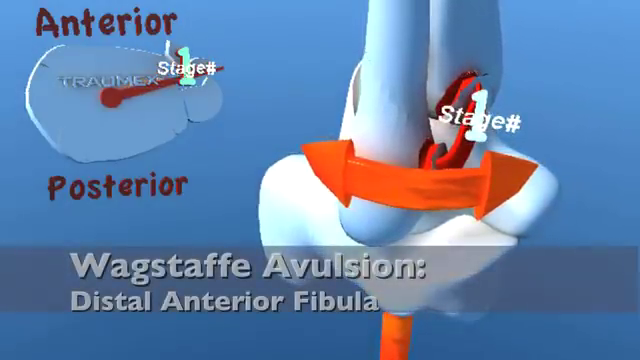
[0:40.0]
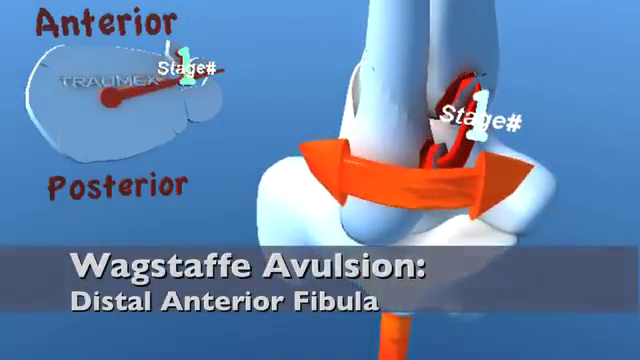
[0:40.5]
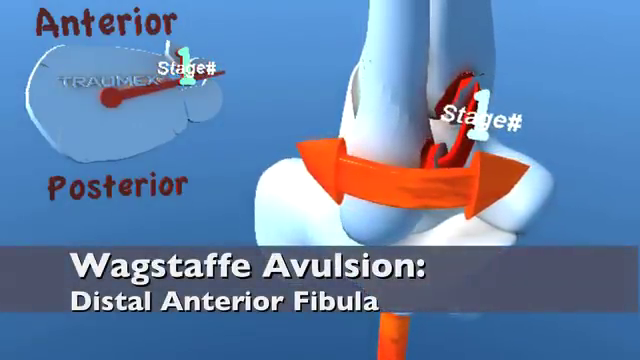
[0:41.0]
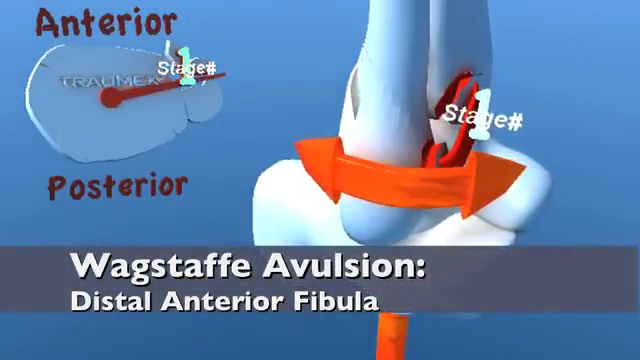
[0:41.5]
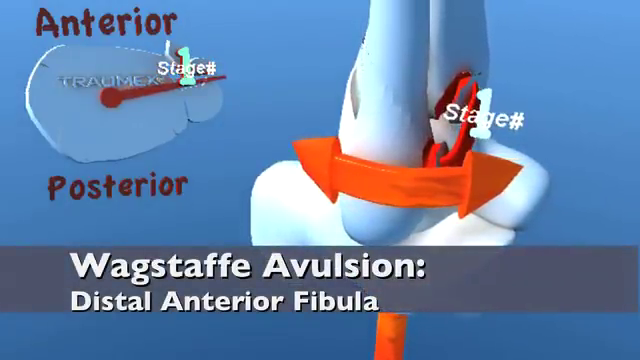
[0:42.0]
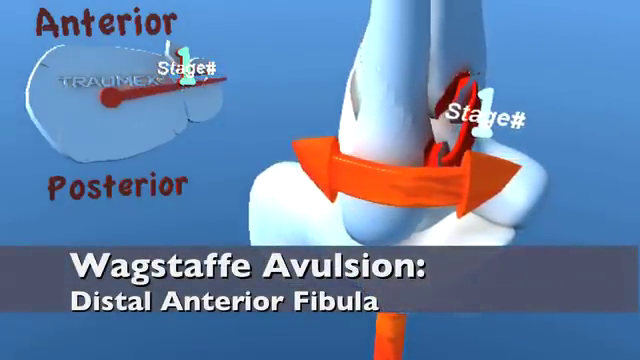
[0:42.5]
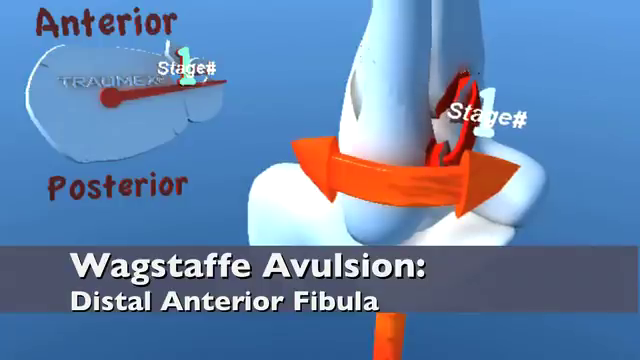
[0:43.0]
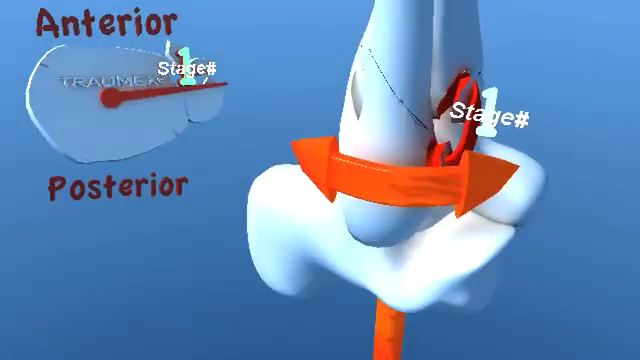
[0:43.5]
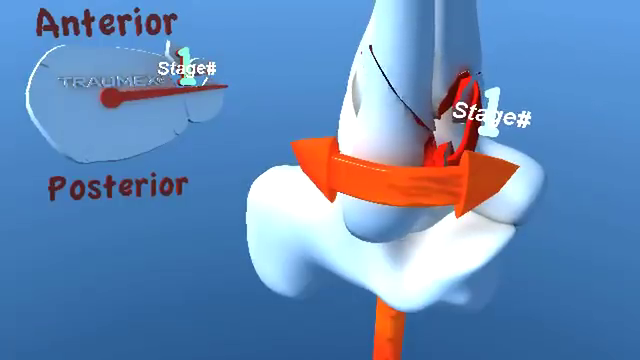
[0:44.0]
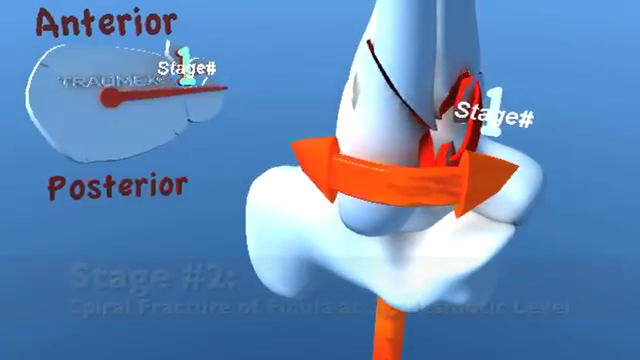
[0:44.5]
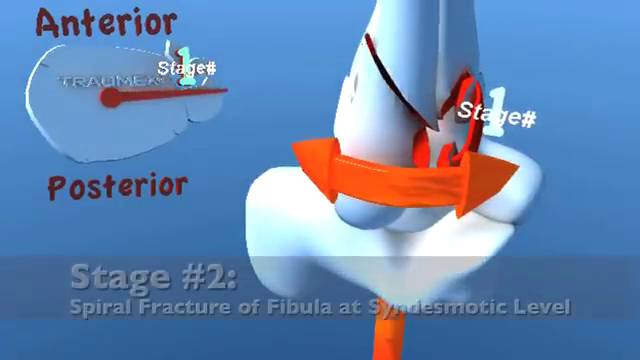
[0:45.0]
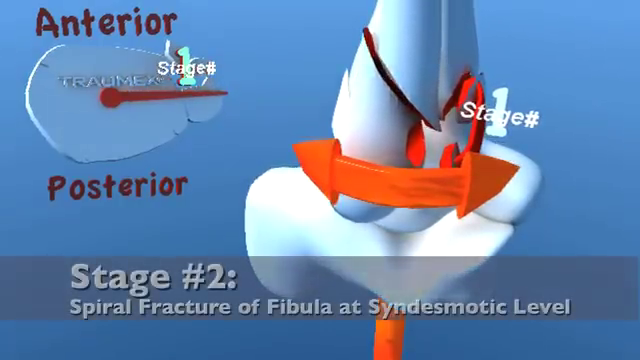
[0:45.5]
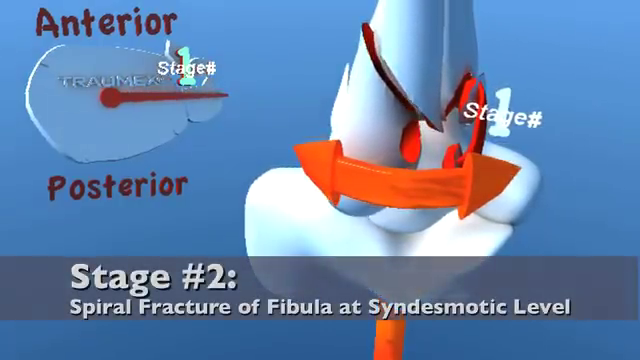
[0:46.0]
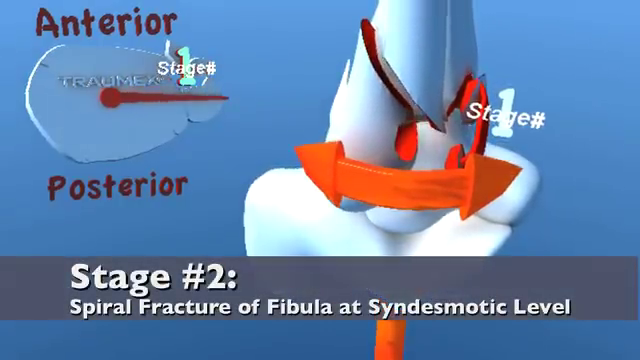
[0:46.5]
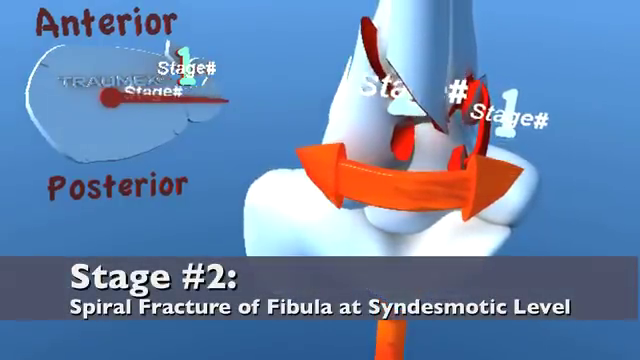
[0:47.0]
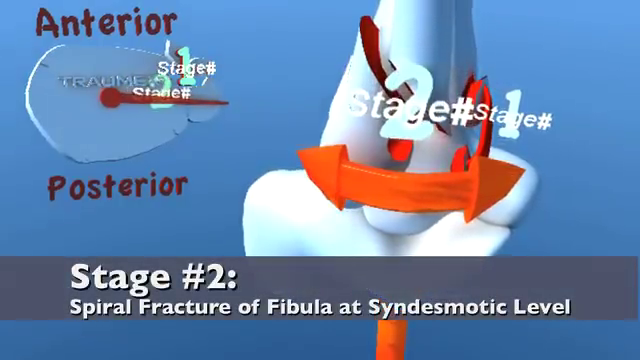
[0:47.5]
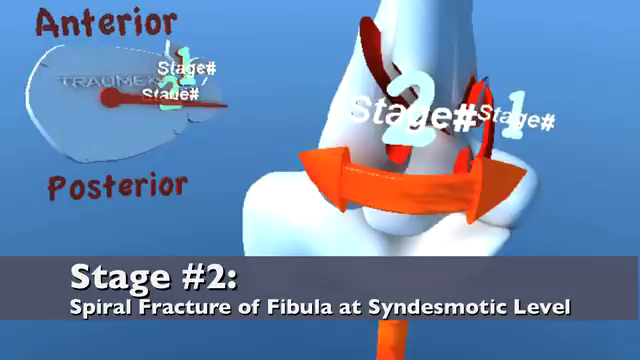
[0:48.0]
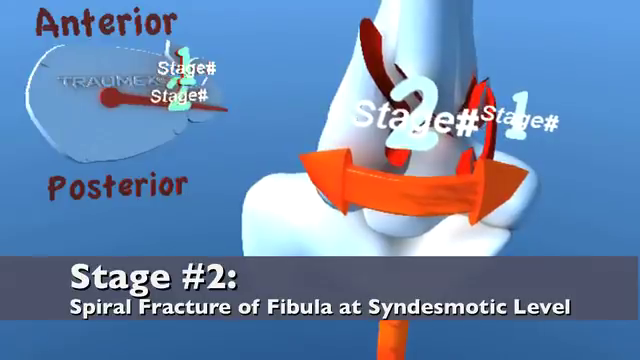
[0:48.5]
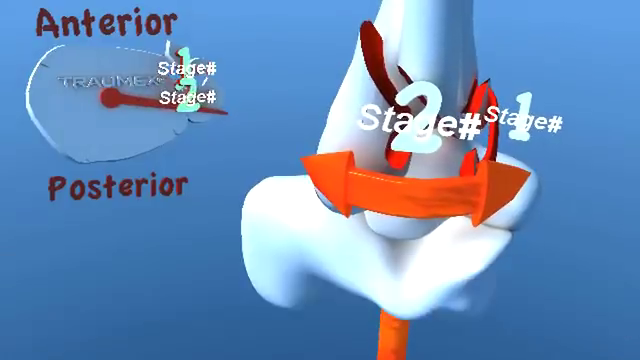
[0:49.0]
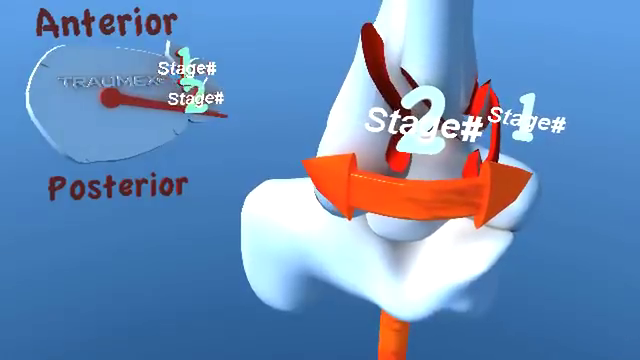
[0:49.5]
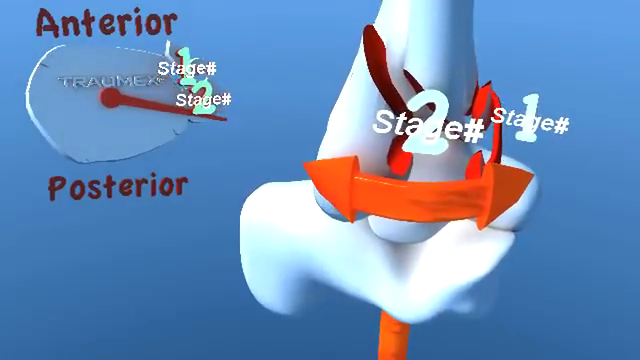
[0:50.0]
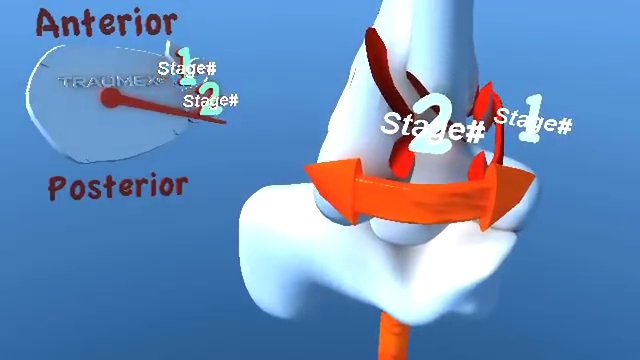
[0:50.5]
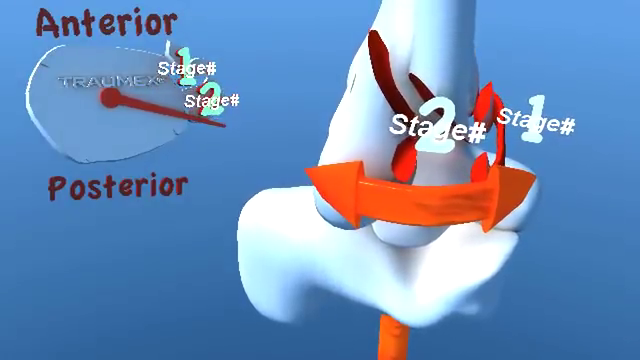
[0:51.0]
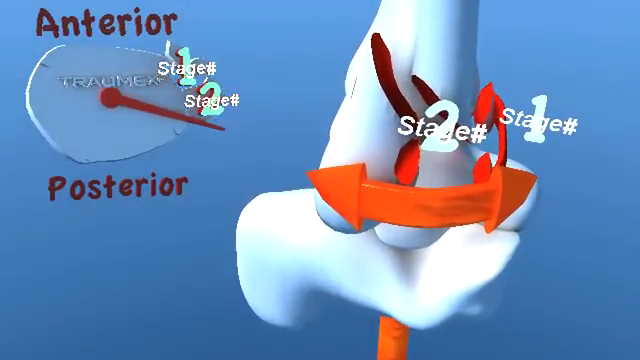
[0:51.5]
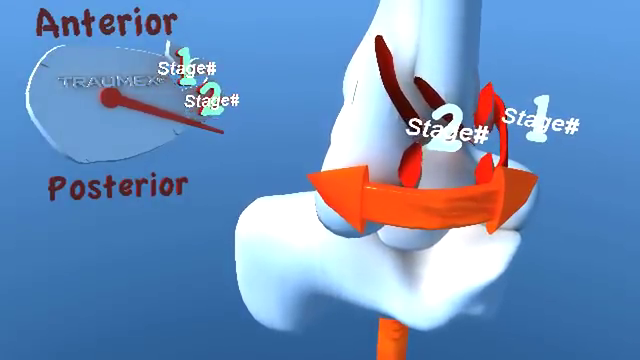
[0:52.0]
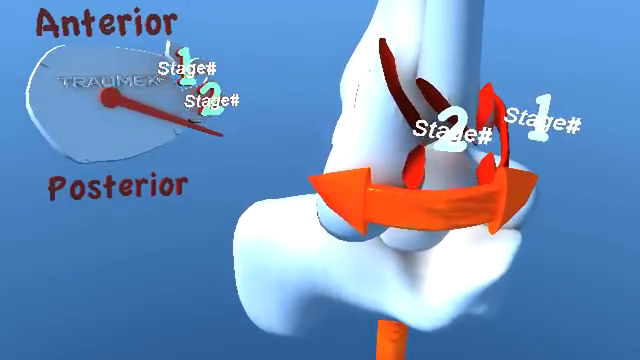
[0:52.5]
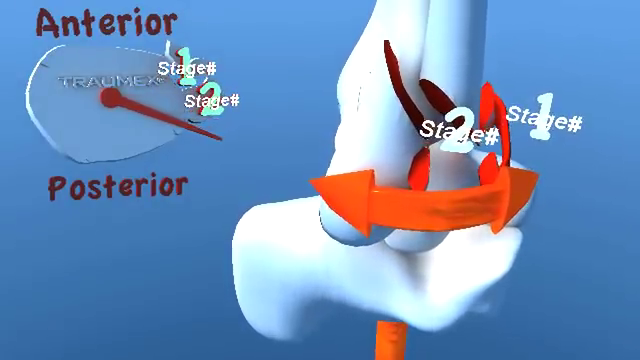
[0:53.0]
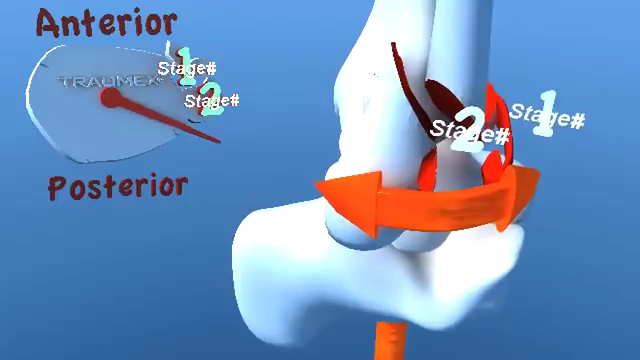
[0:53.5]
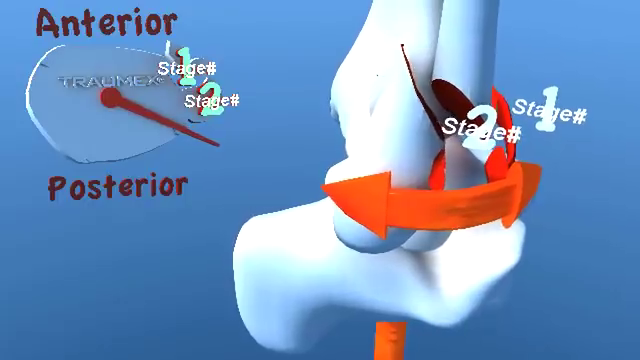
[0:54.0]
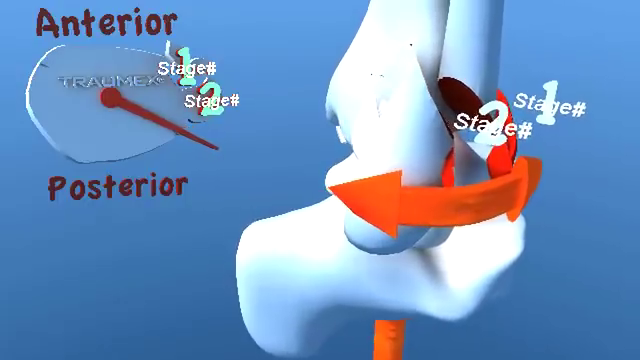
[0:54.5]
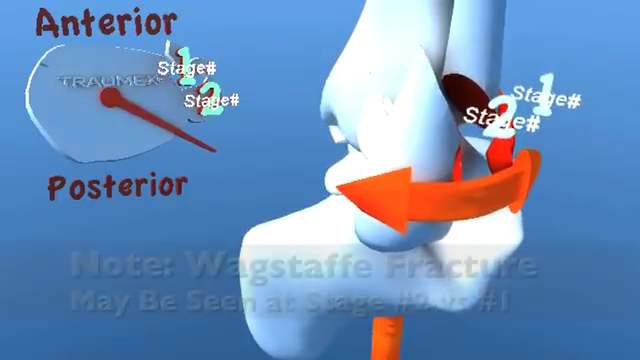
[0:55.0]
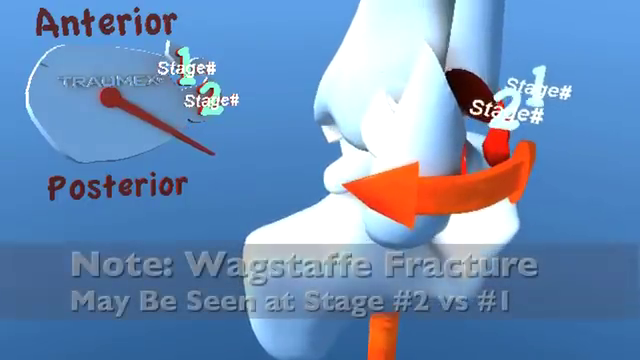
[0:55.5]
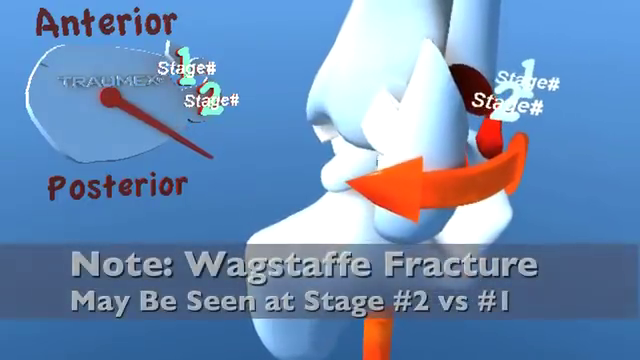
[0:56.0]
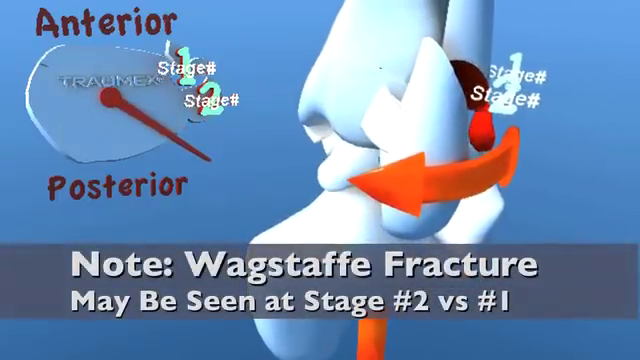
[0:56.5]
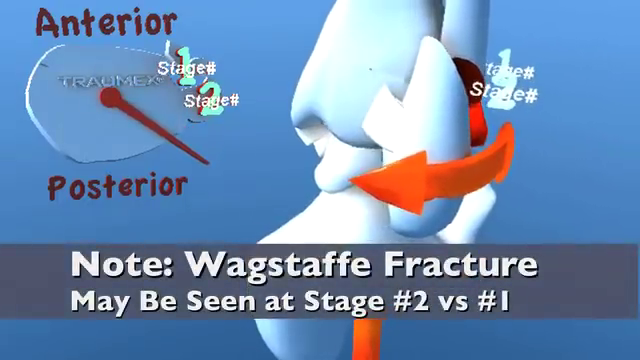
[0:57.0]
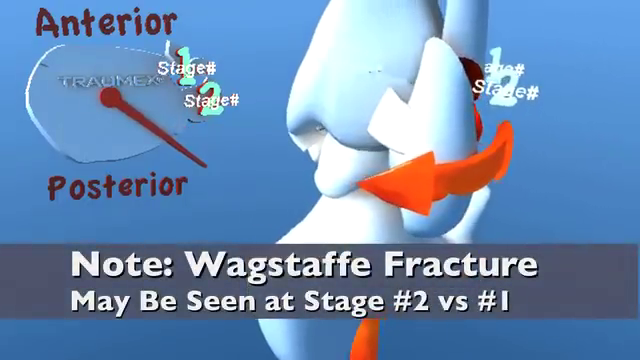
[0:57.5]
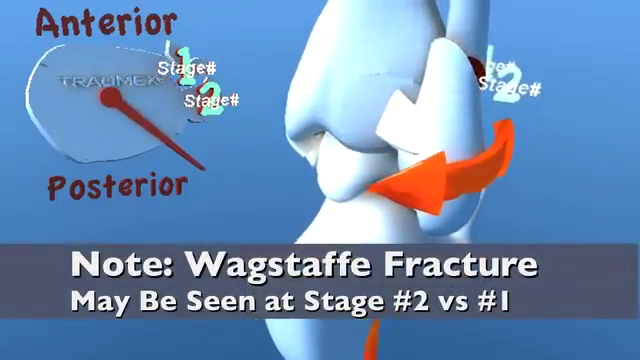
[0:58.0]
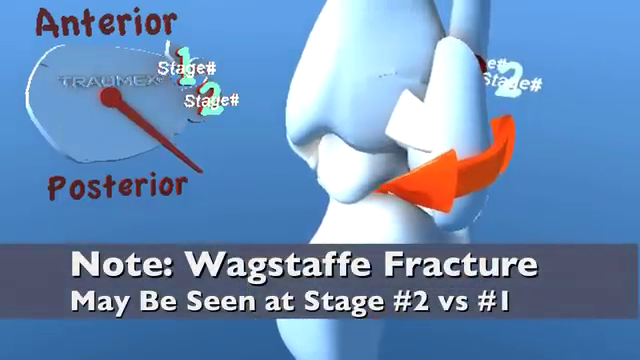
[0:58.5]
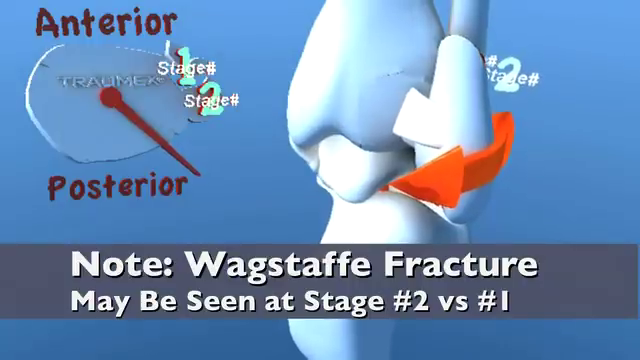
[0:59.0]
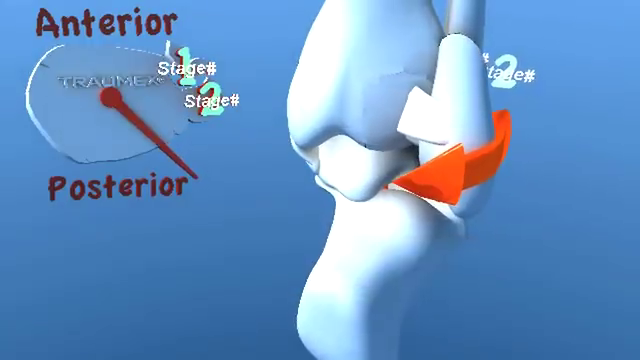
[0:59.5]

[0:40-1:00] The image on the far left has become a clock. Its hand began at the top during stage one and has now moved to about two o'clock, with "stage one" appearing above. The clock hand continues to move down. A fracture appears in the ankle, with redness along the line. The bottom bar reappears, reading "stage two, spiral fracture of fibula at syndesmotic level", and the words "stage two" appear. The arrow moves in line with the fracture, and "stage two" appears on the clock. The camera continues to rotate around the ankle. Text at the bottom reads "note Wagstaff fracture may be seen at stage two or stage one". As the view moves on, the damage is no longer visible, since the ankle is seen from a completely different angle, perhaps towards the posterior.